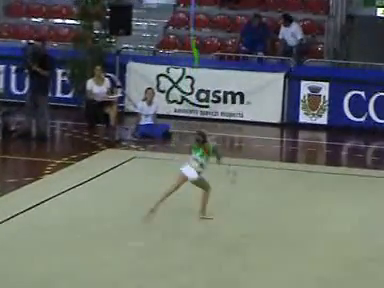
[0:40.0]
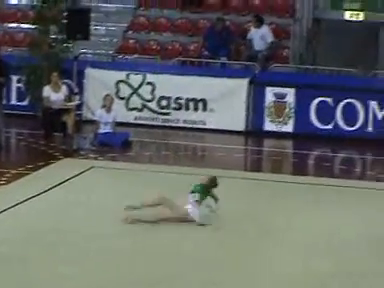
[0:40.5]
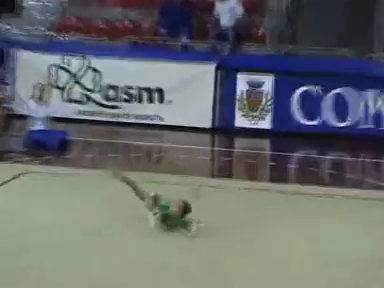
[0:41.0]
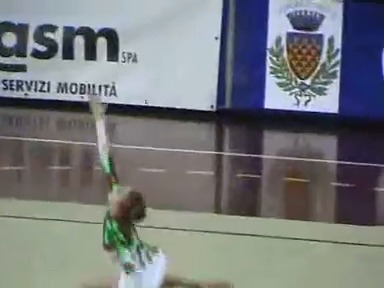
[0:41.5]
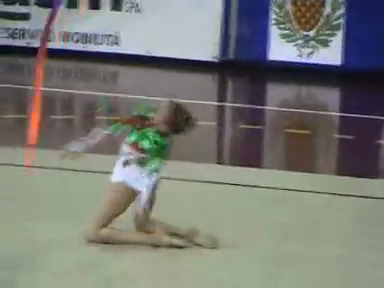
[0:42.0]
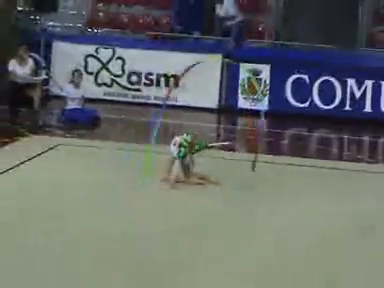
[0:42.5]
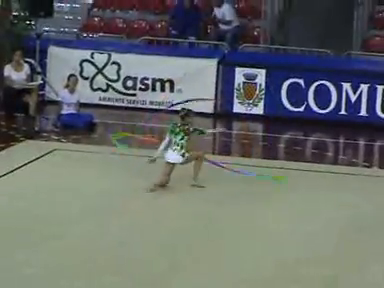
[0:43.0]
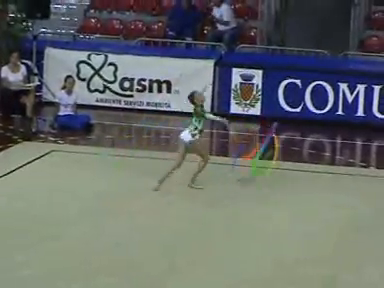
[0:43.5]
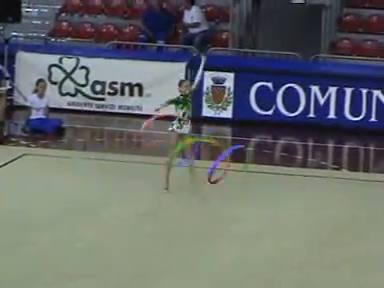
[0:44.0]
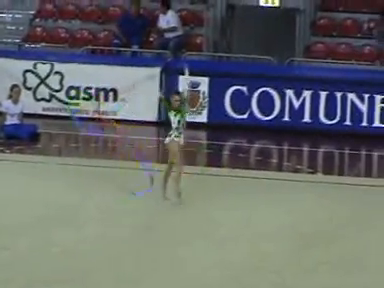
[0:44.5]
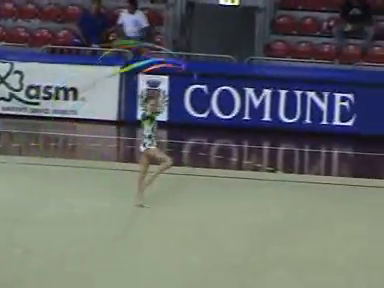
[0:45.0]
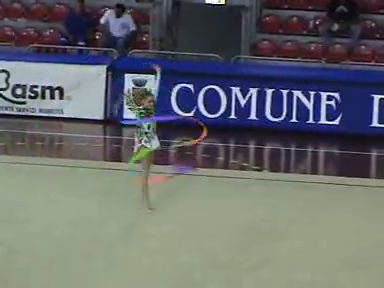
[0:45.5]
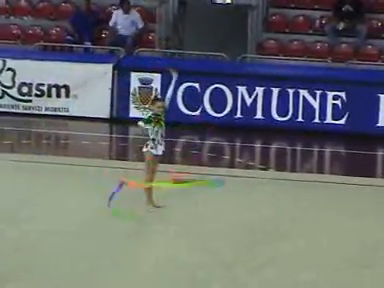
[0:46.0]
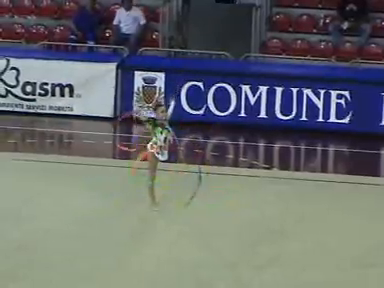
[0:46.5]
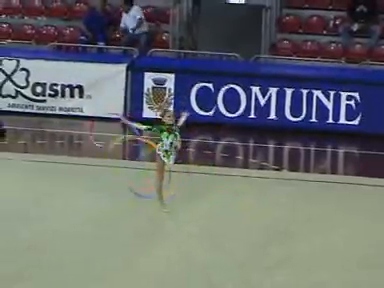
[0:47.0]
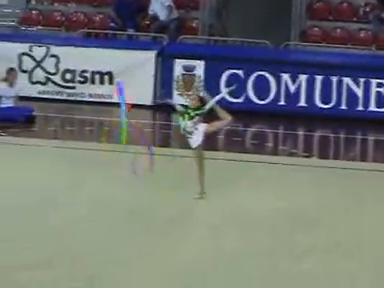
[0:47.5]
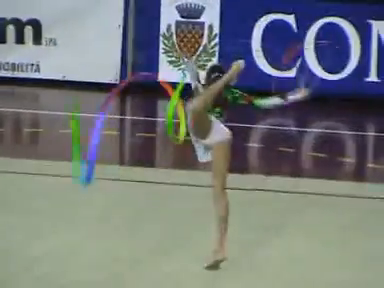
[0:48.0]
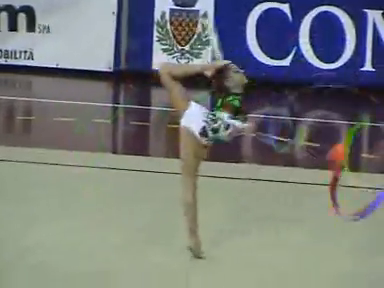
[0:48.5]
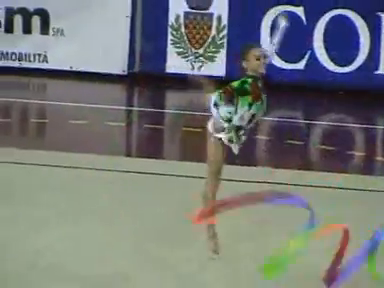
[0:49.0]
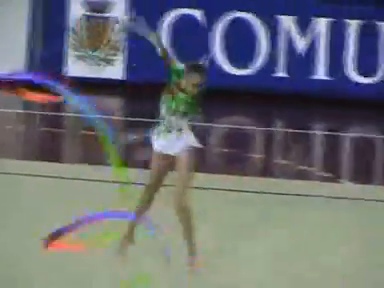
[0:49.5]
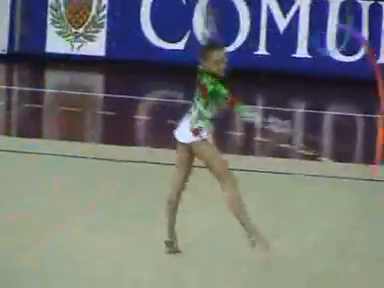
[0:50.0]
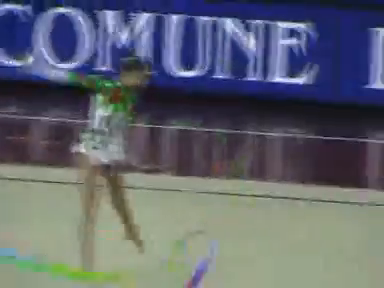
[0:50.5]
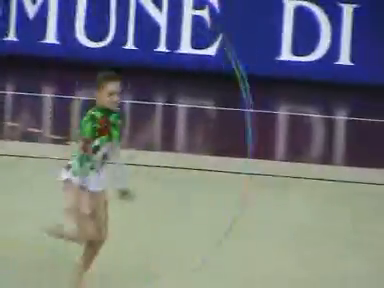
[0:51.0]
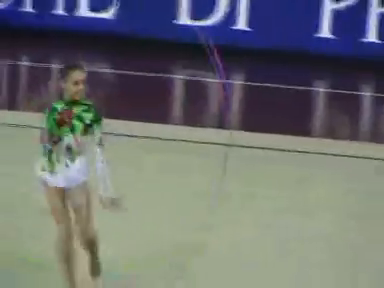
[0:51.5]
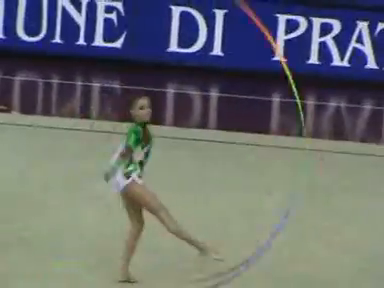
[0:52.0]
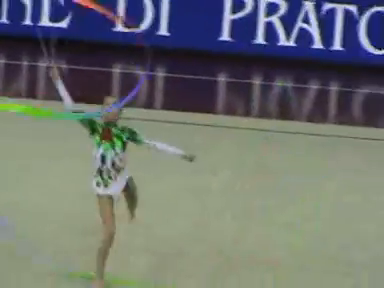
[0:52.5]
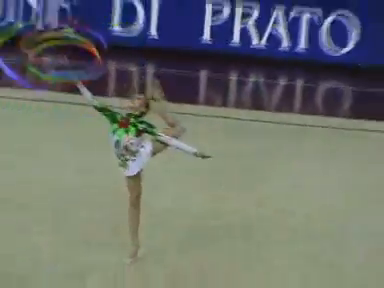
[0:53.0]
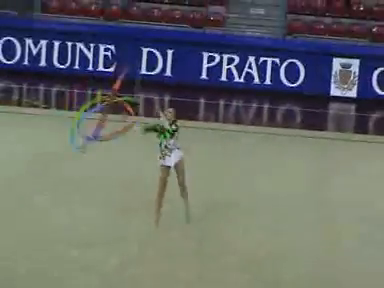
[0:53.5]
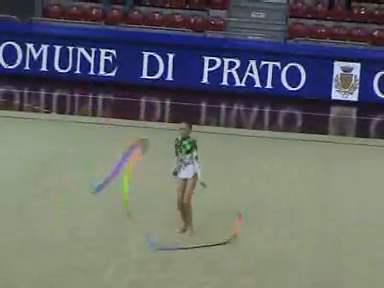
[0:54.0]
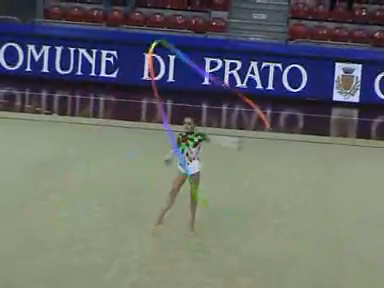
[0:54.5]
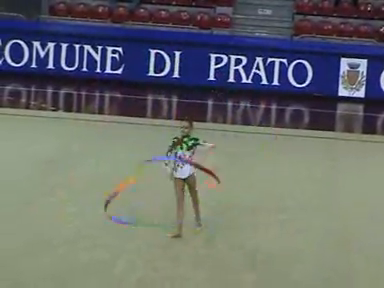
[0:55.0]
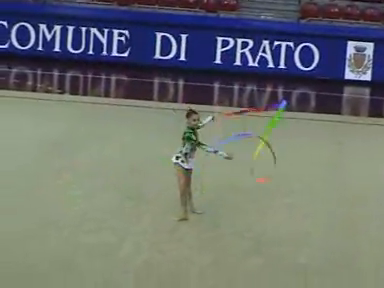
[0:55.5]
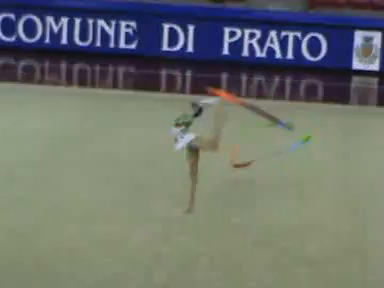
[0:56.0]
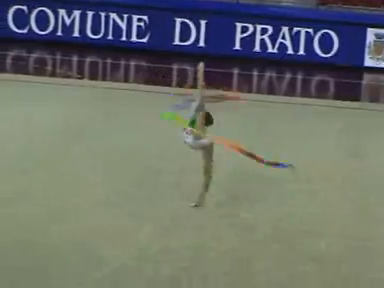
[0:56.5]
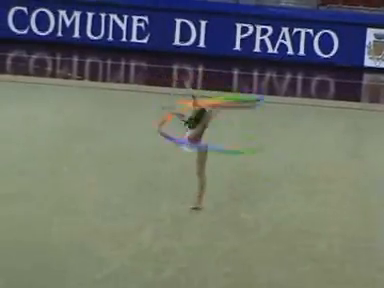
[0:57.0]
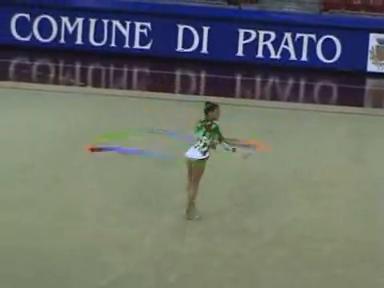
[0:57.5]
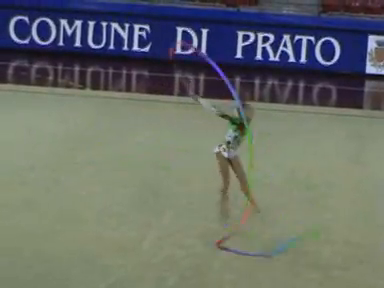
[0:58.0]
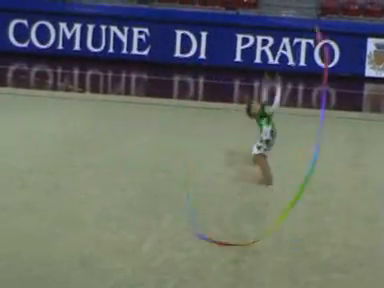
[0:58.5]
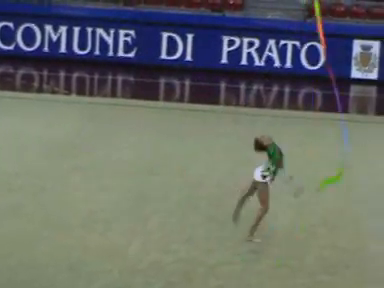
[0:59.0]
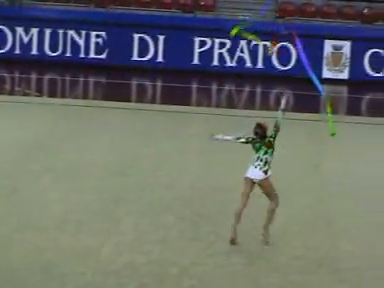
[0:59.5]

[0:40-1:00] The girl keeps dancing with the ribbon. On the floor she rolls, throws the ribbon into the air and catches it, then stands and swirls it around her body and through the air as she spins and dances on one leg. She switches the ribbon from hand to hand, jumps into the air and catches it. There may be a camera person in the opposite corner near the two women seated at the corner of the mat. The girl looks like a young teen; she is slender, spins the colorful ribbon around and around, and seems very flexible and agile, bending her back far to the rear and raising her leg high next to her head. People sit in the seats in the background, and the resolution is not very good. The two people in the seats nearest her corner seem to be talking to each other and not paying attention to her. The camera stays focused on her rather than on the people in the stands.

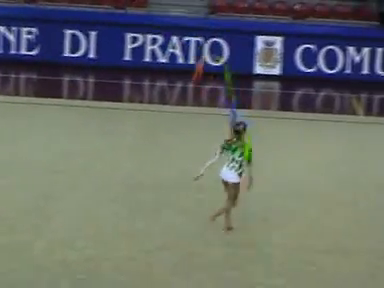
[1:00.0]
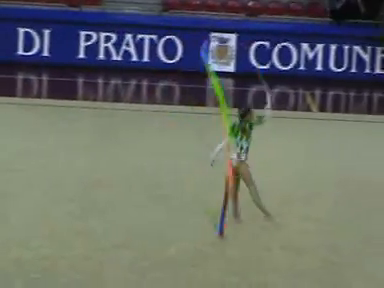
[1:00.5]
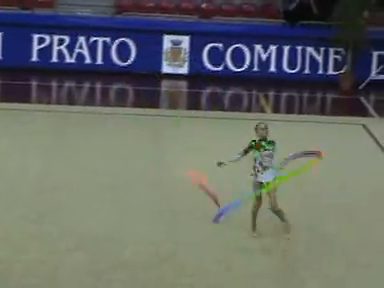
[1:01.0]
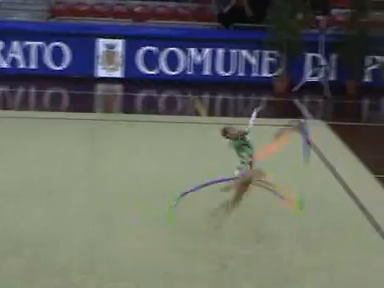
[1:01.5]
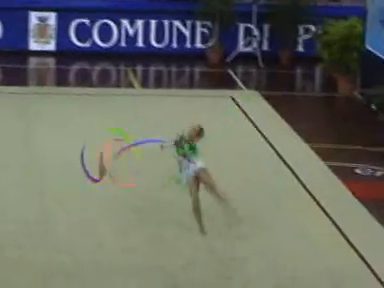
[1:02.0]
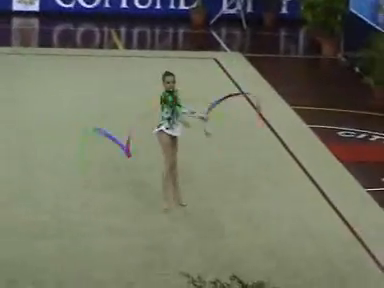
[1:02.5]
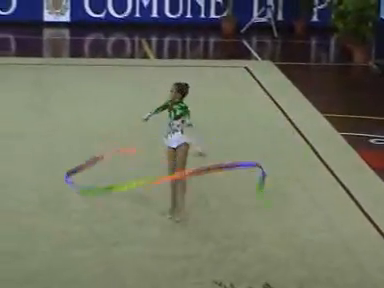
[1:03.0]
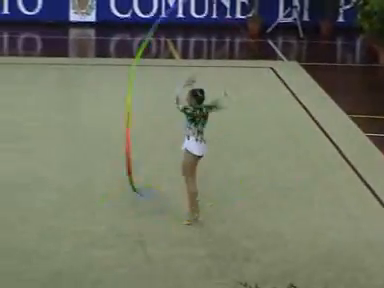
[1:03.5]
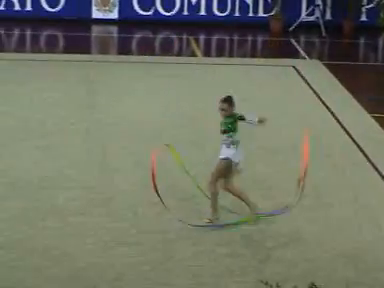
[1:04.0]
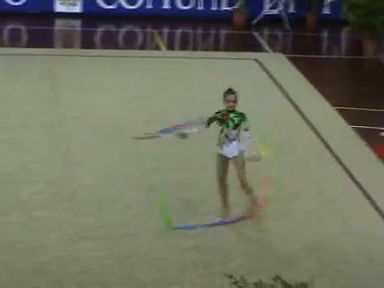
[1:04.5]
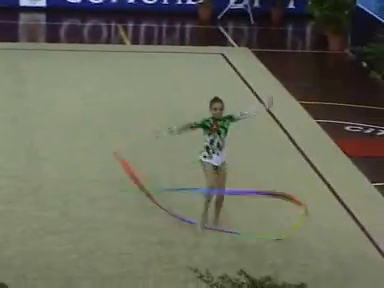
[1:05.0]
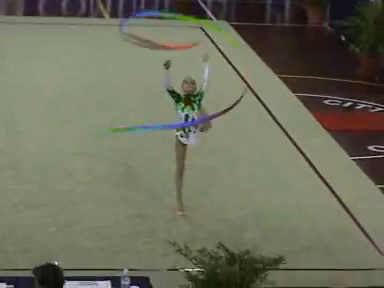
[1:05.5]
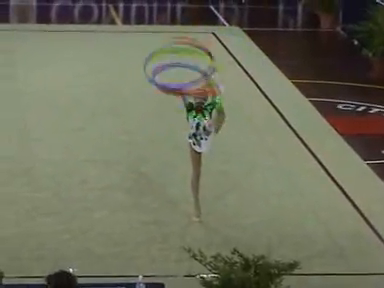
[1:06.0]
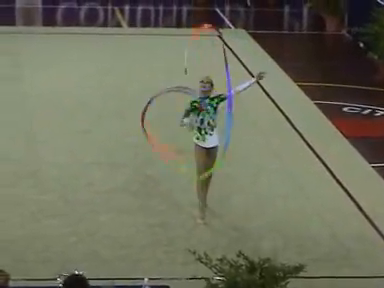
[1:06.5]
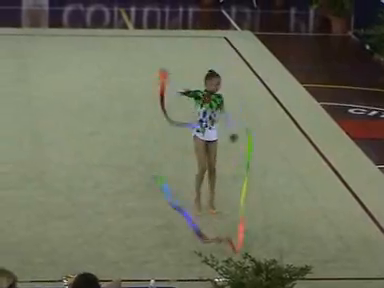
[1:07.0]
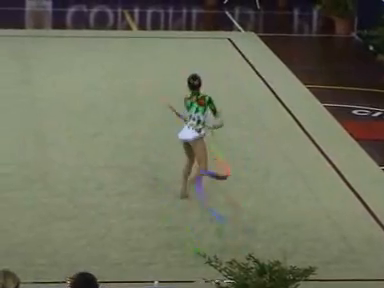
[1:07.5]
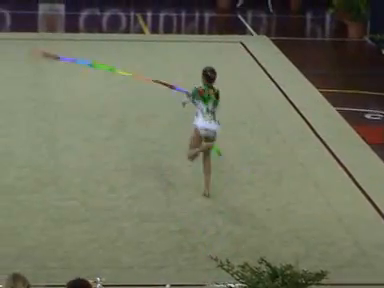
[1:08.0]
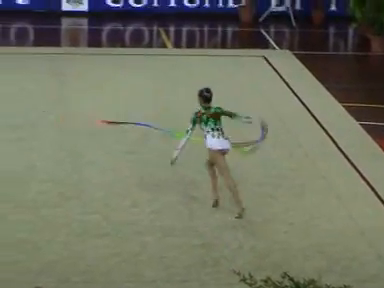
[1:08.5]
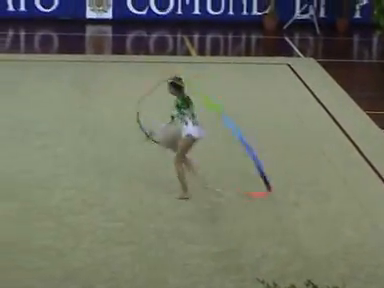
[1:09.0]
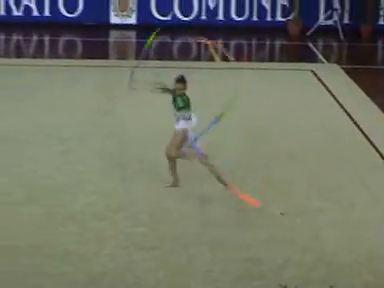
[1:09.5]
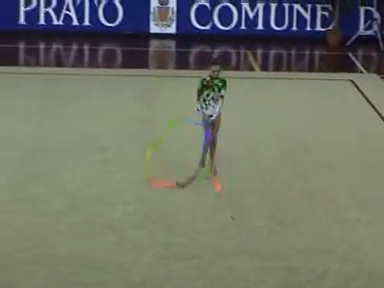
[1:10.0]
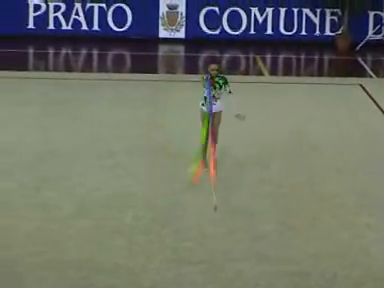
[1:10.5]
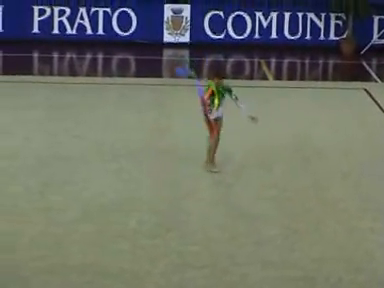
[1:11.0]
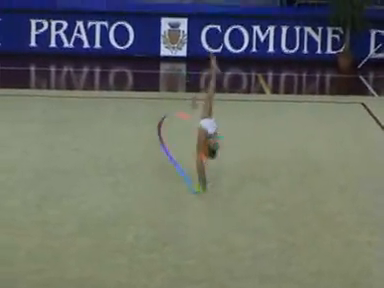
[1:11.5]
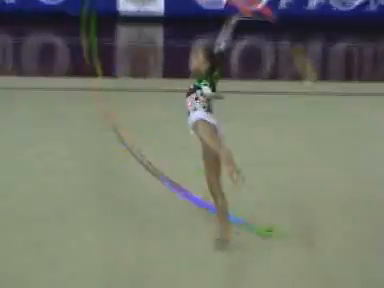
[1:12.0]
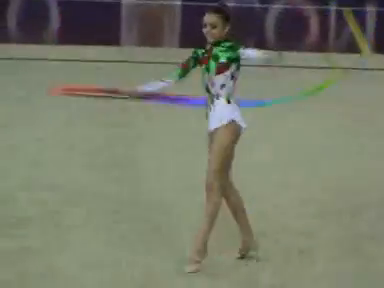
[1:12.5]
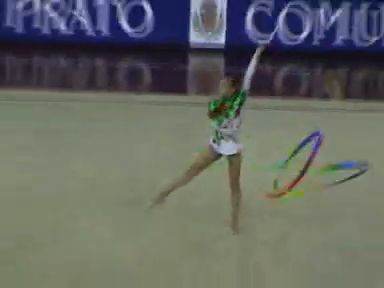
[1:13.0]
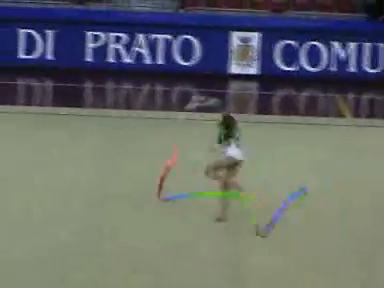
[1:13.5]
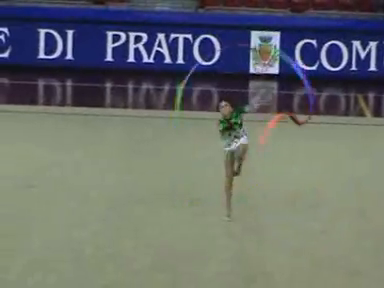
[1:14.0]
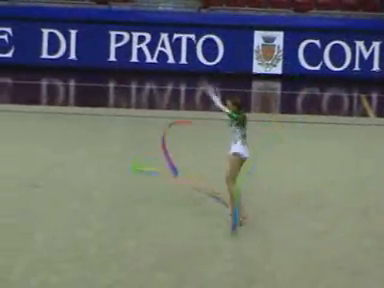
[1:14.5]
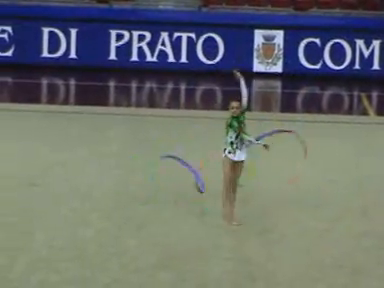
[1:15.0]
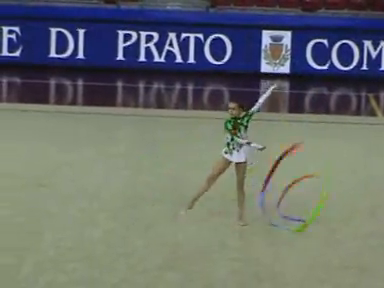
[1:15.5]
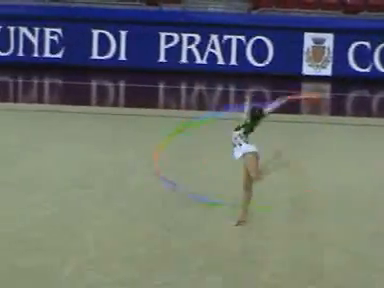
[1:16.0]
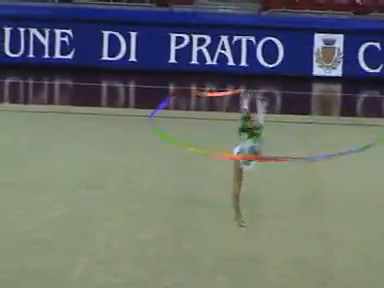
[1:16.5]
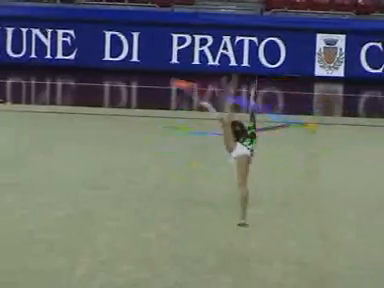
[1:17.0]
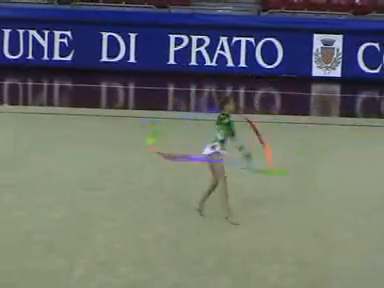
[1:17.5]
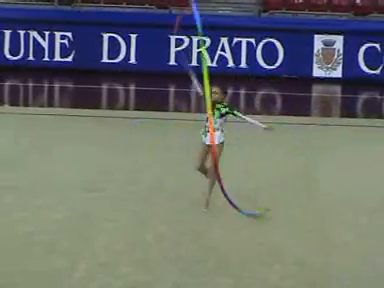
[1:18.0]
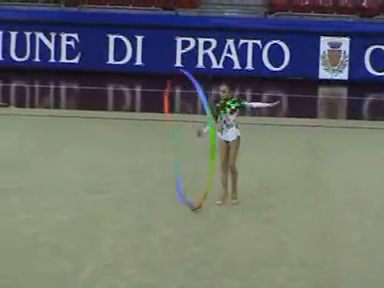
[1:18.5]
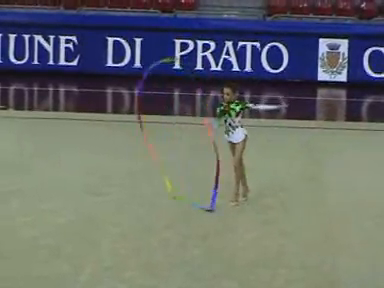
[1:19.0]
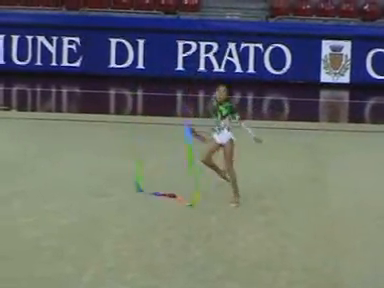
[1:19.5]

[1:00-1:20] The girl continues dancing with the multicolored ribbon, now at the far right of the mat. At the bottom of the screen are the heads of people who are probably the judges. She does one-legged flips, spinning her body around and landing on one leg, and keeps flipping, spinning and swirling the ribbon without letting it touch the floor or losing her grip, switching hands. She pauses for a moment, then spins her body around with her leg over her head, spinning with her leg wrapped around her head. The camera stays on her, so the spectators' reactions are not visible. There appear to be at least a couple of potted plants, possibly real or fake: one at the edge of the table where the judges may be seated and the other in the far corner of the mat.